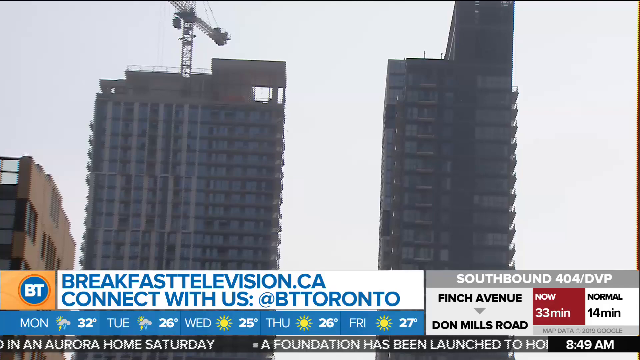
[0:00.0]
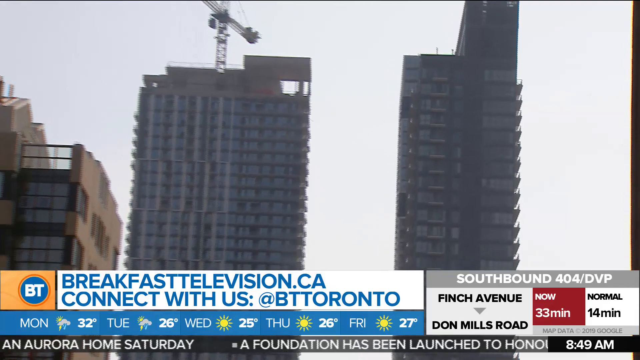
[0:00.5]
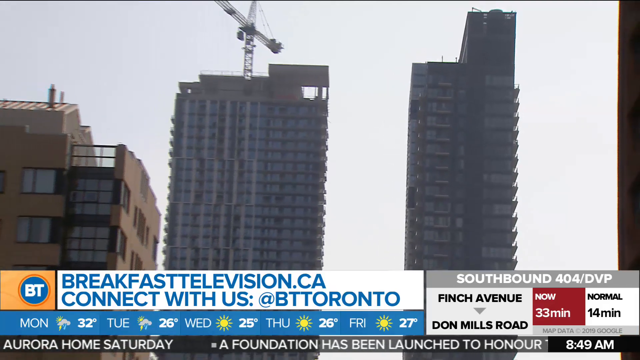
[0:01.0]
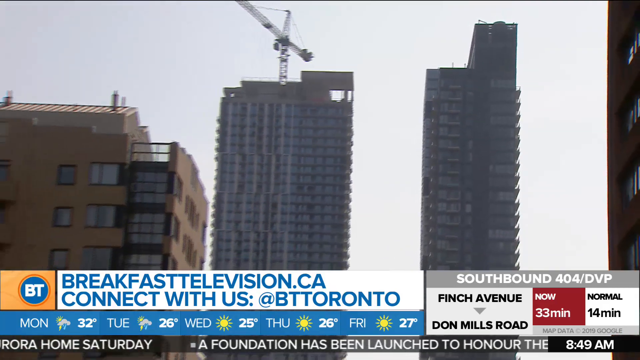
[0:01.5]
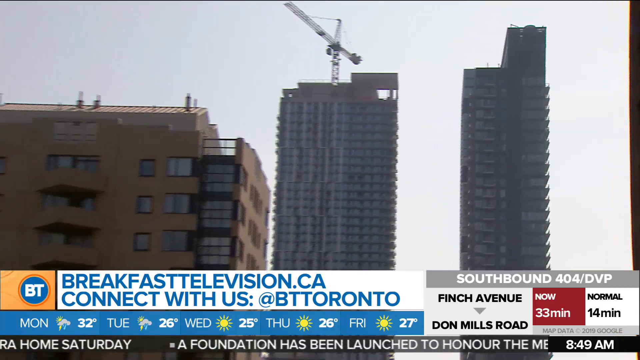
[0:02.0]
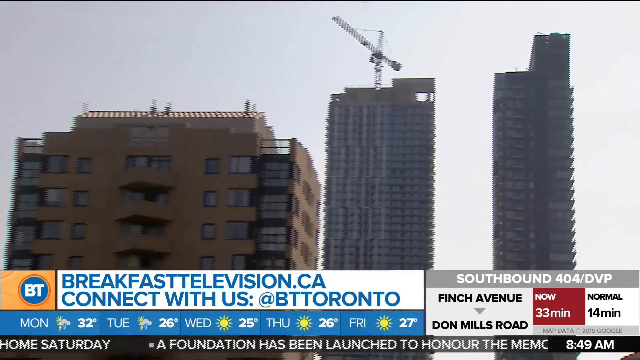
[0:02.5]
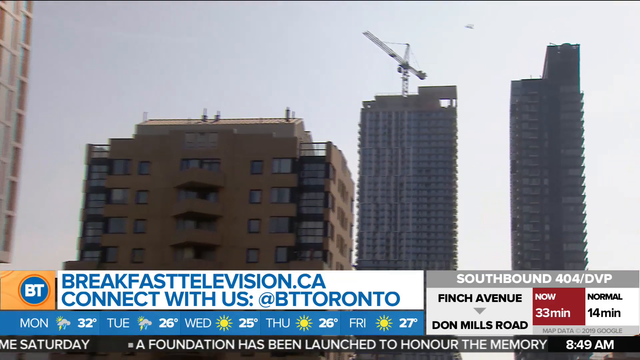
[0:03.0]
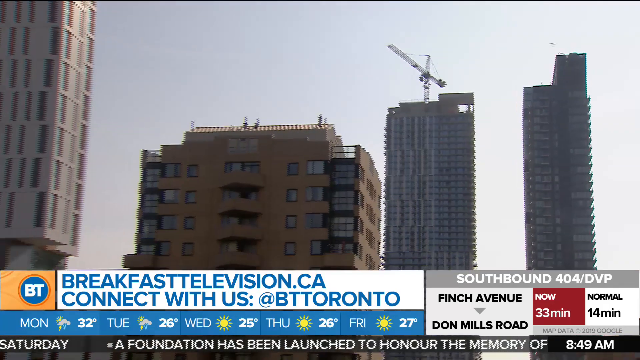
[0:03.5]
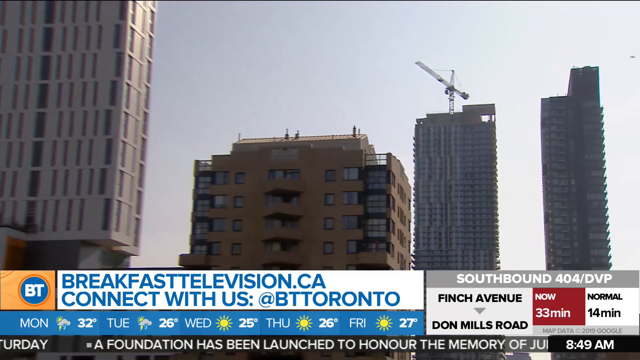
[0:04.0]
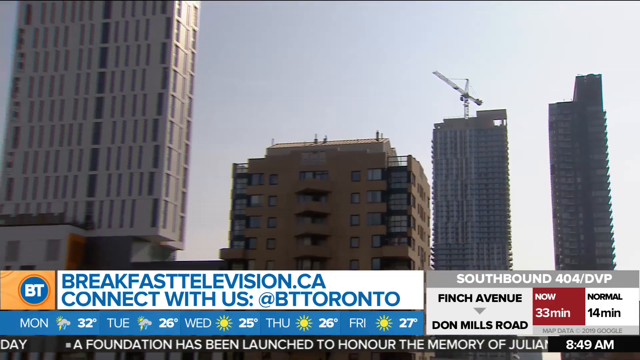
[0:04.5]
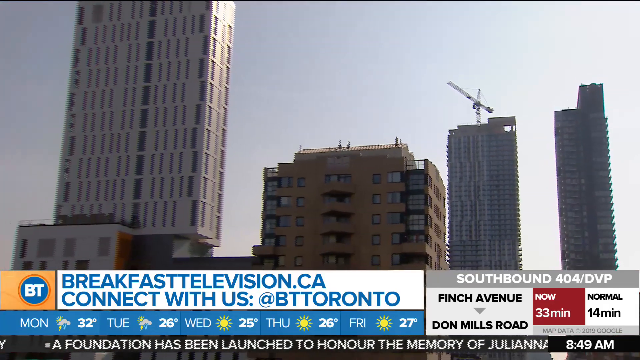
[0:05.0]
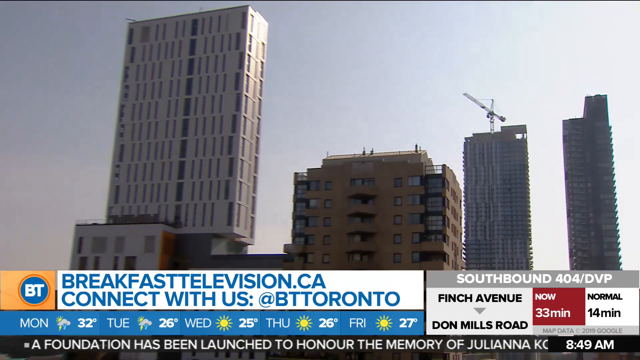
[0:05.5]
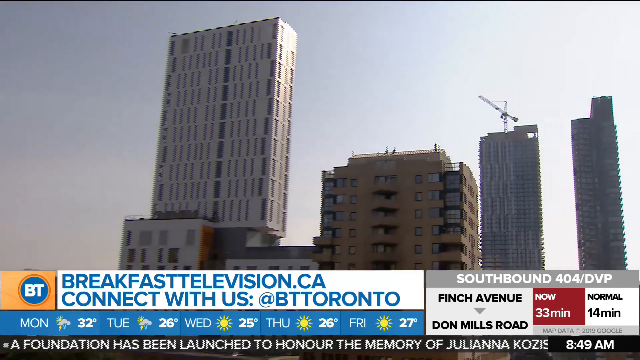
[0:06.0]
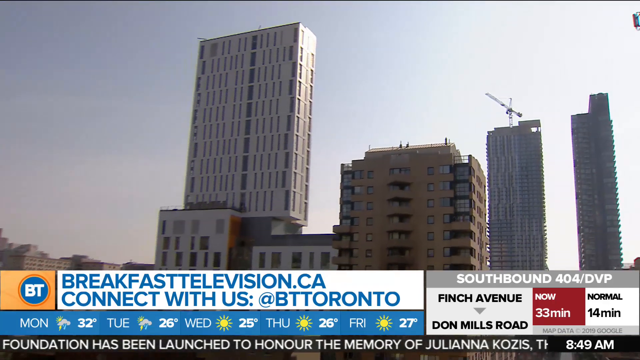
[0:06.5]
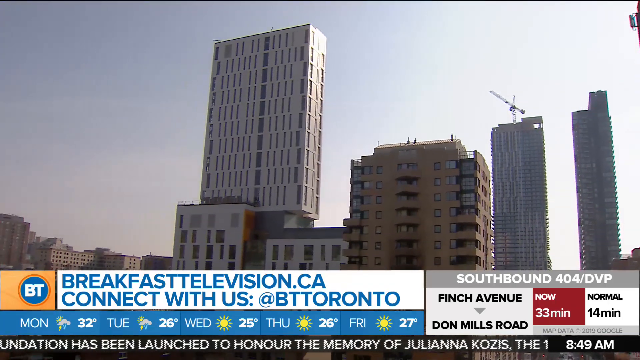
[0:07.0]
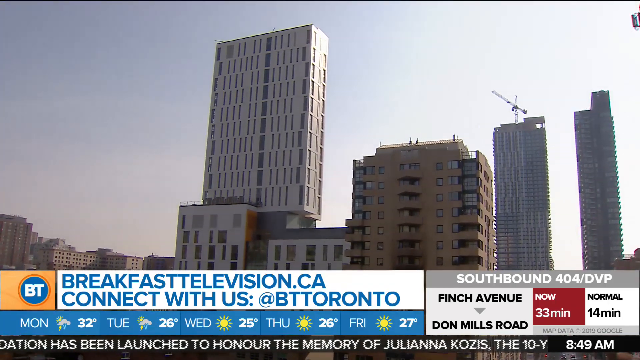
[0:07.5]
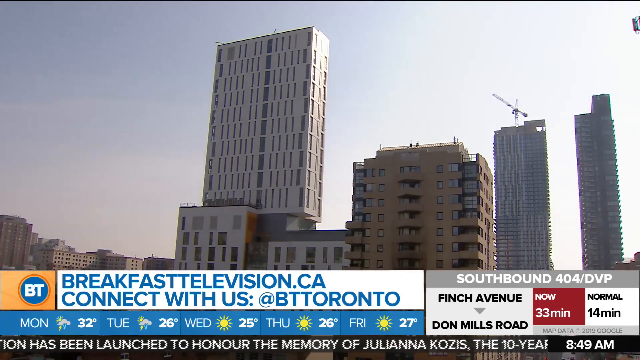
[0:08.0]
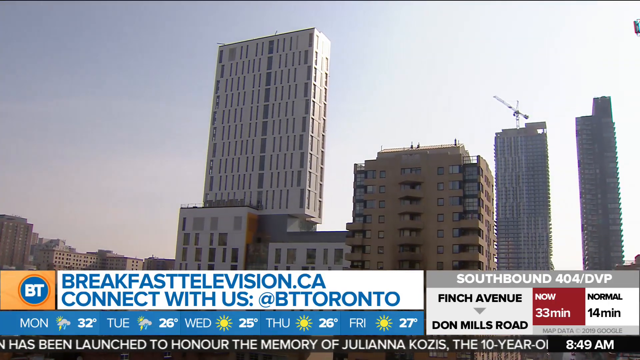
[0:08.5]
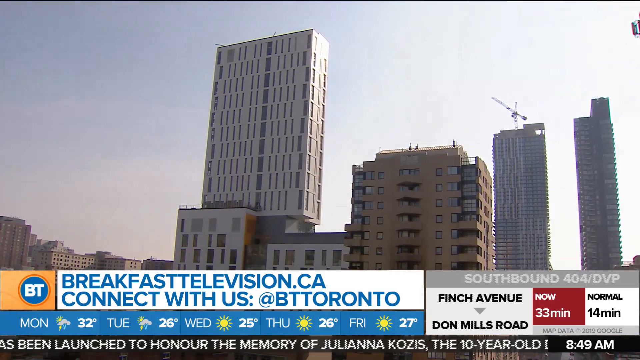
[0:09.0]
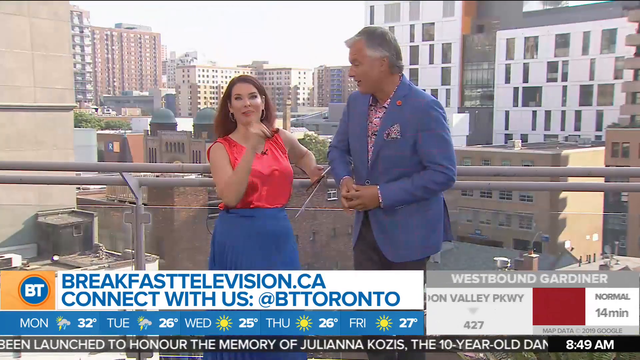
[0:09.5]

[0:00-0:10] The video appears to be a news segment from a Toronto breakfast television show. It opens on a city scene of multiple high-rise apartment buildings; it is unclear whether this is downtown Toronto or the outskirts. A ticker runs along the bottom of the screen: traffic information is on the right-hand side, a weather forecast for the week is on the very bottom, and the middle reads "breakfasttelevision.ca. Connect with us at BT Toronto".